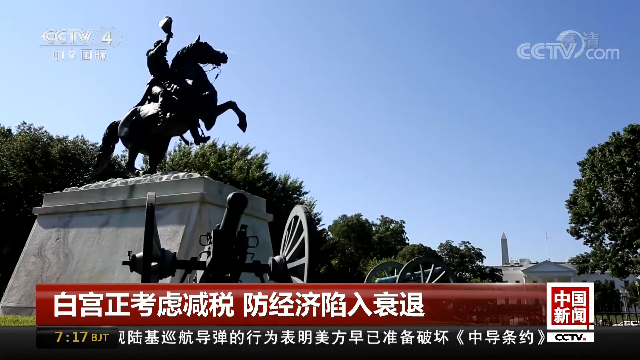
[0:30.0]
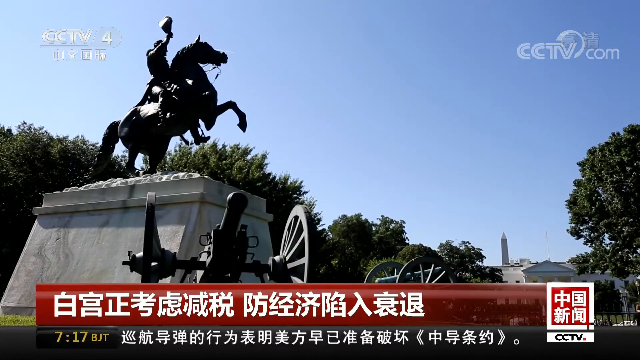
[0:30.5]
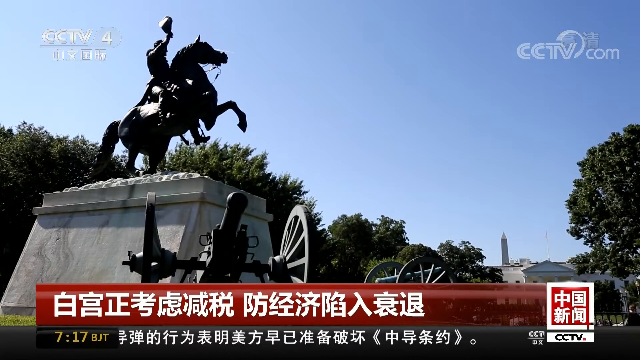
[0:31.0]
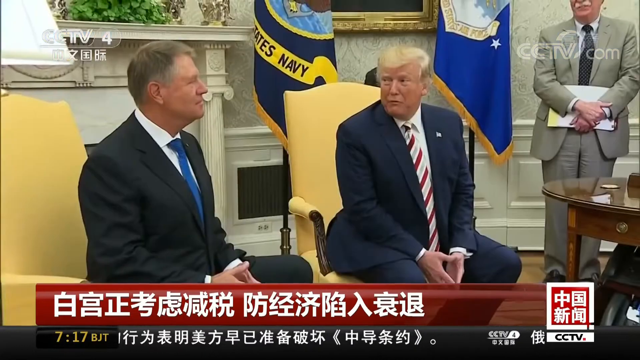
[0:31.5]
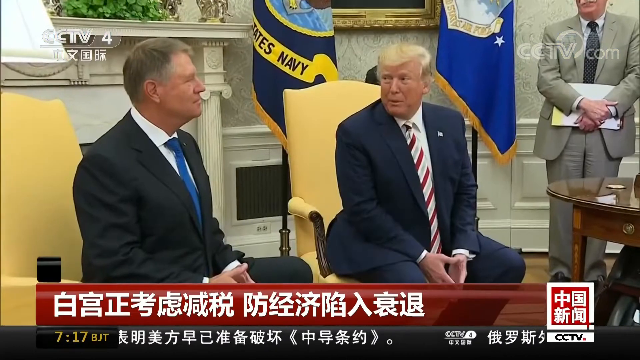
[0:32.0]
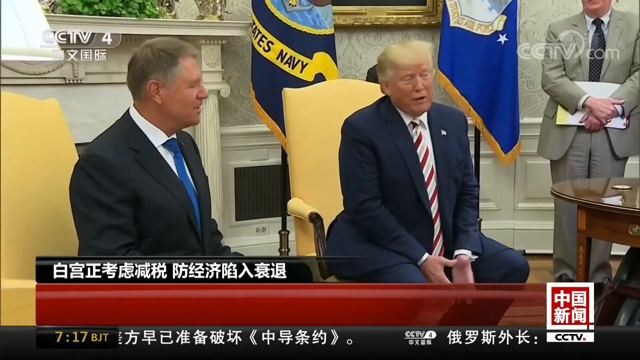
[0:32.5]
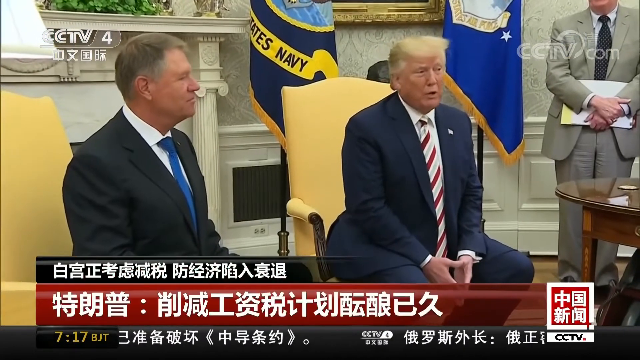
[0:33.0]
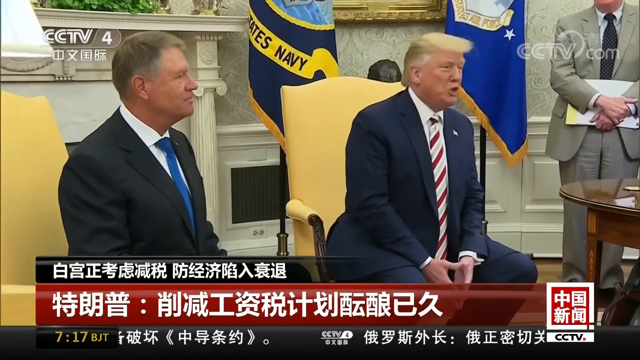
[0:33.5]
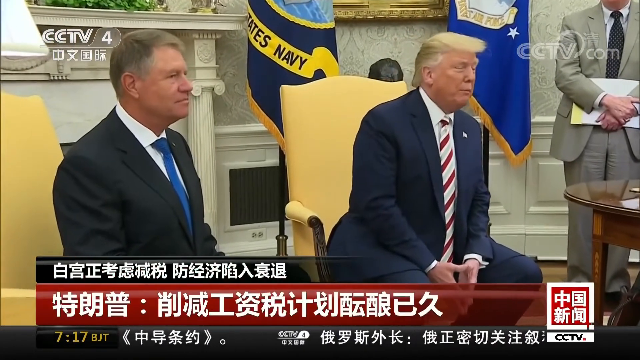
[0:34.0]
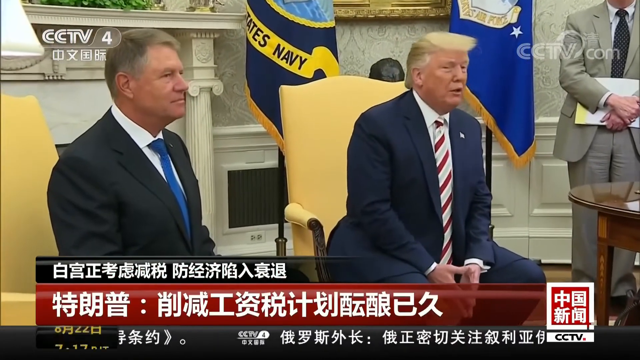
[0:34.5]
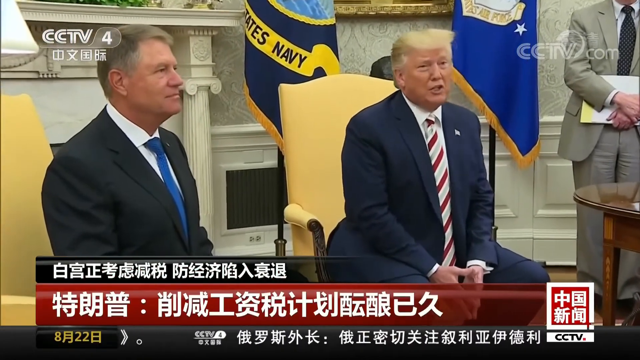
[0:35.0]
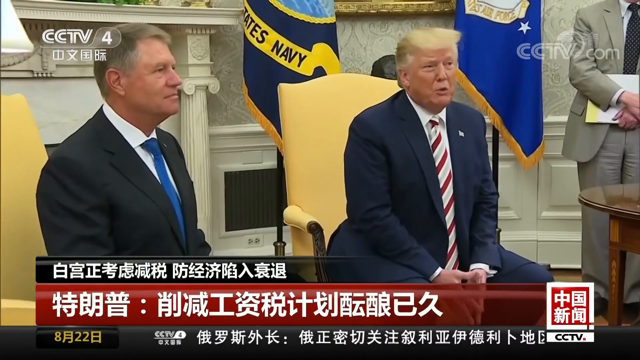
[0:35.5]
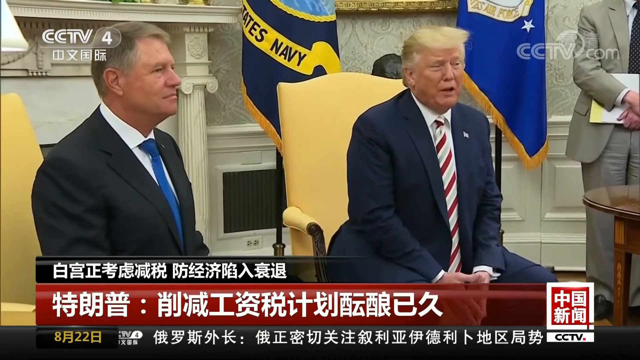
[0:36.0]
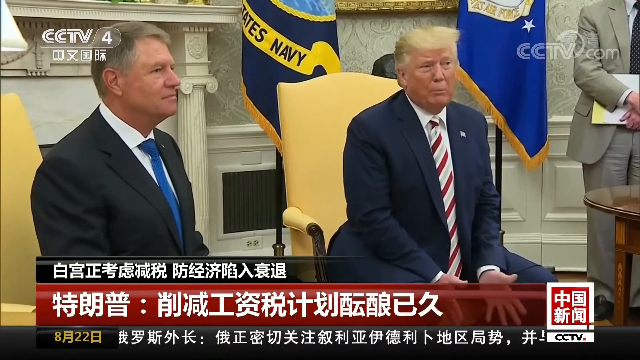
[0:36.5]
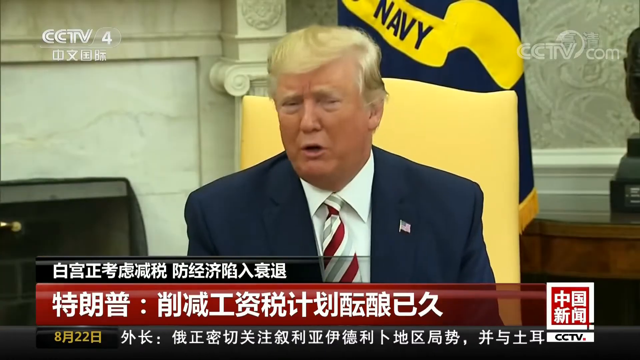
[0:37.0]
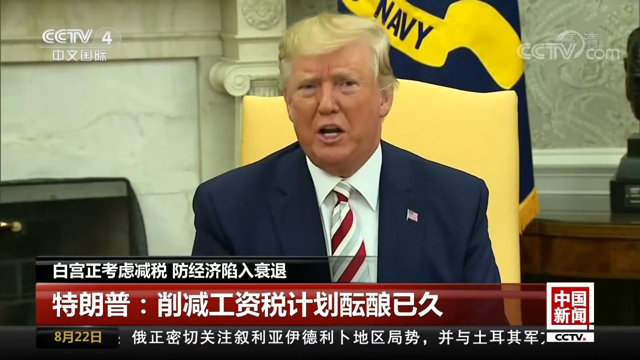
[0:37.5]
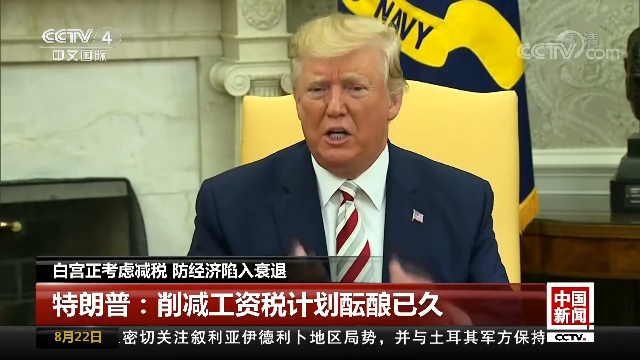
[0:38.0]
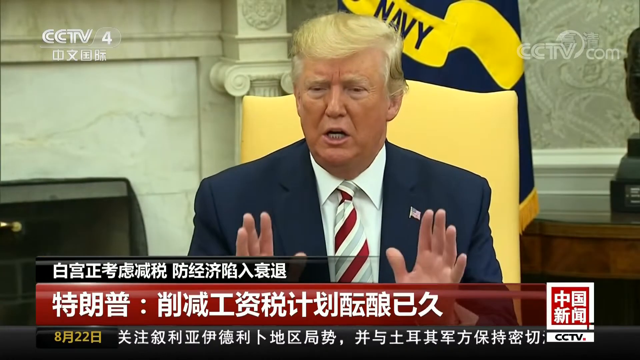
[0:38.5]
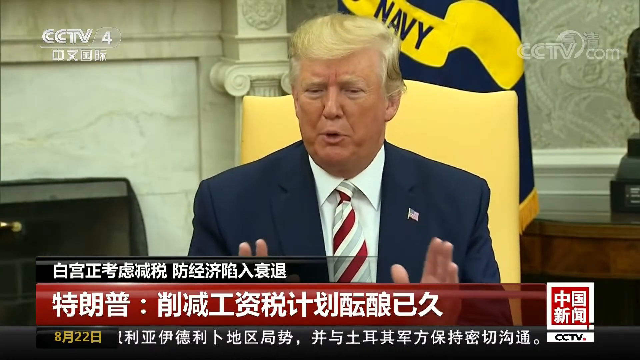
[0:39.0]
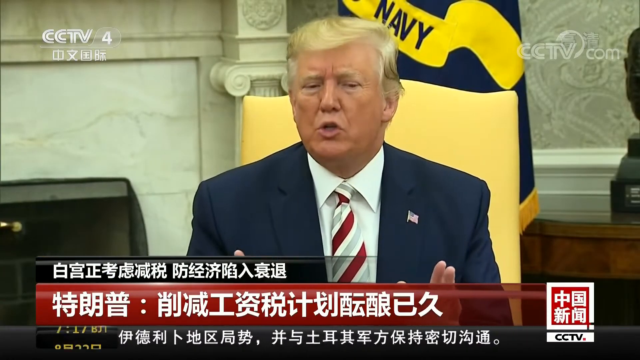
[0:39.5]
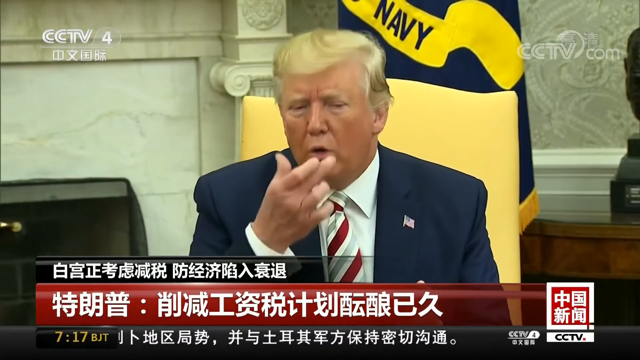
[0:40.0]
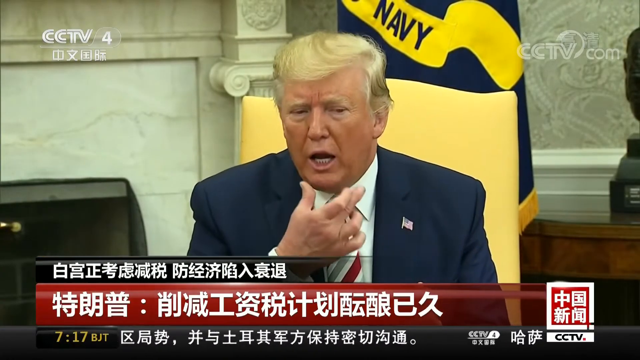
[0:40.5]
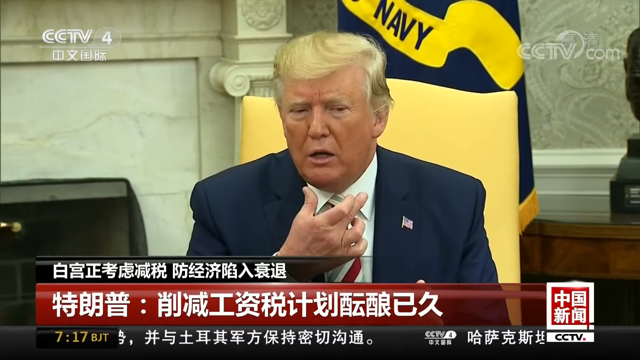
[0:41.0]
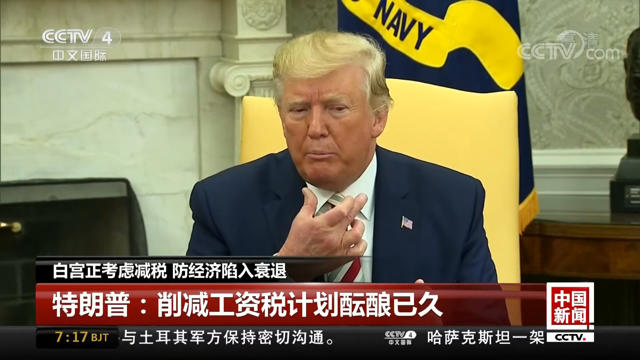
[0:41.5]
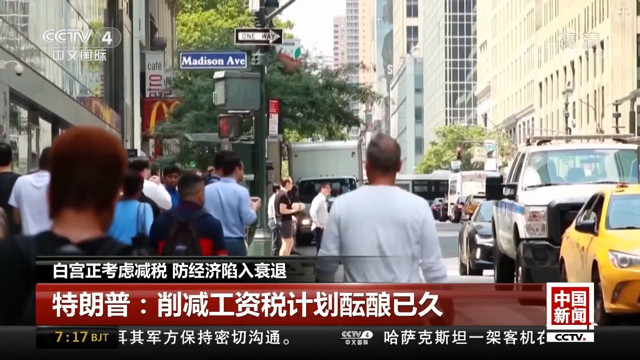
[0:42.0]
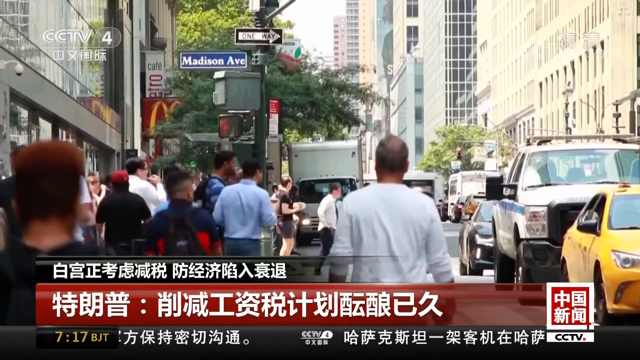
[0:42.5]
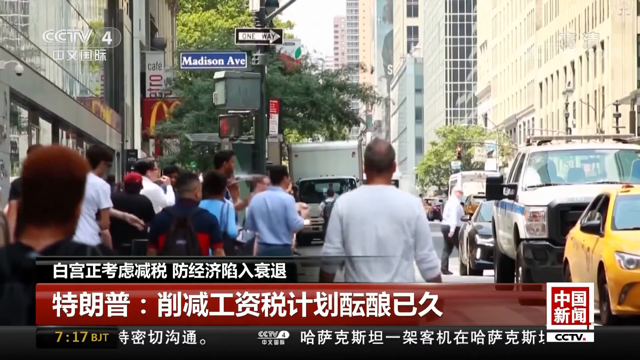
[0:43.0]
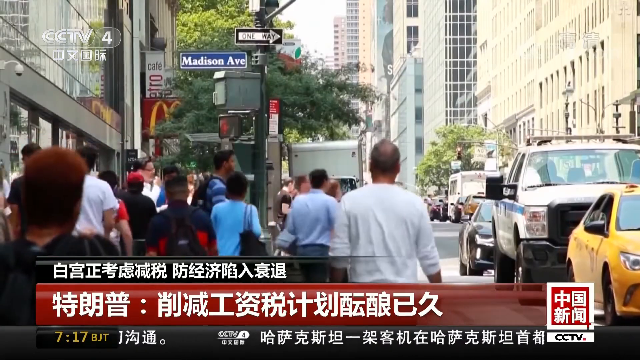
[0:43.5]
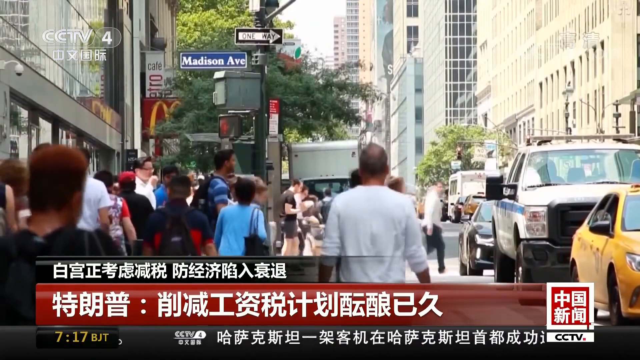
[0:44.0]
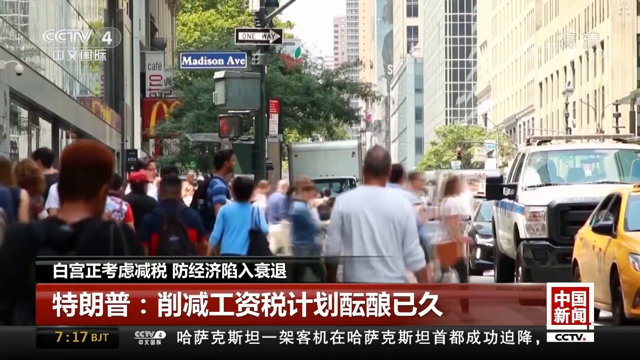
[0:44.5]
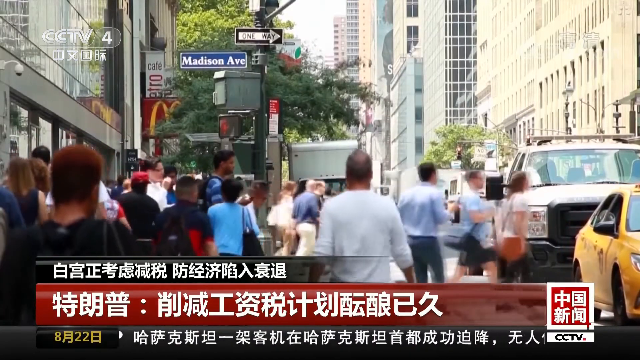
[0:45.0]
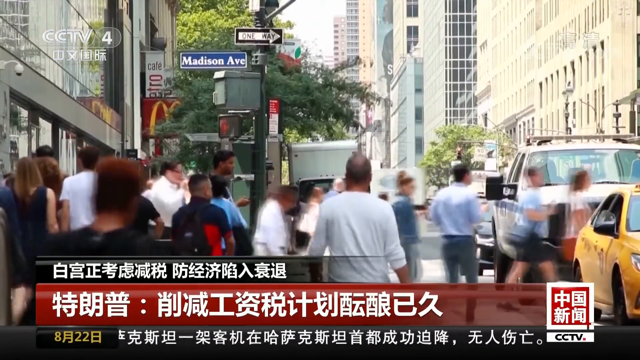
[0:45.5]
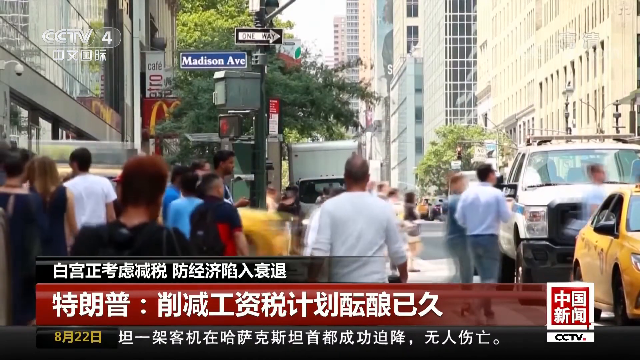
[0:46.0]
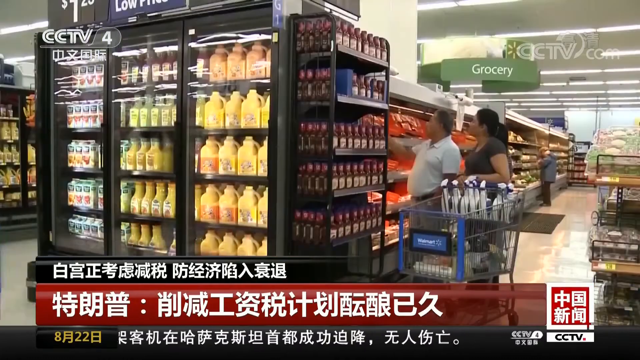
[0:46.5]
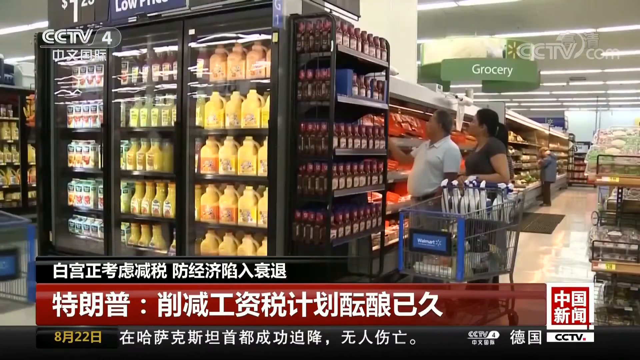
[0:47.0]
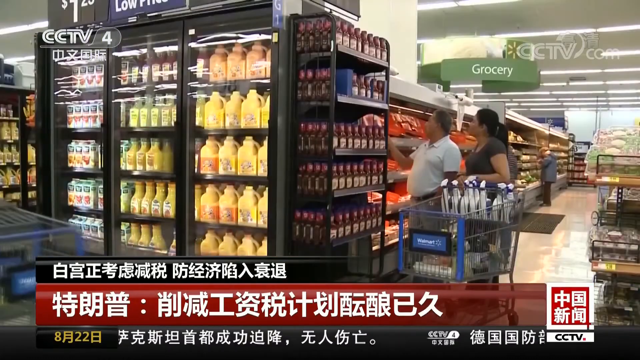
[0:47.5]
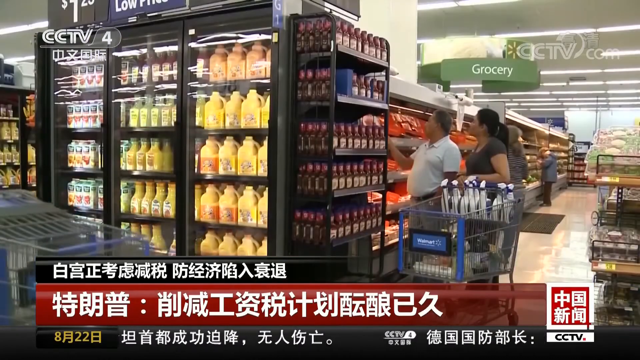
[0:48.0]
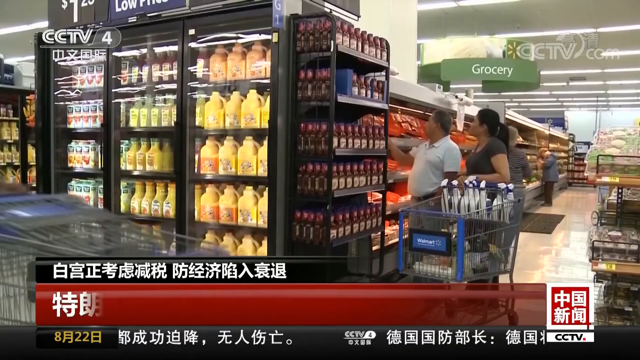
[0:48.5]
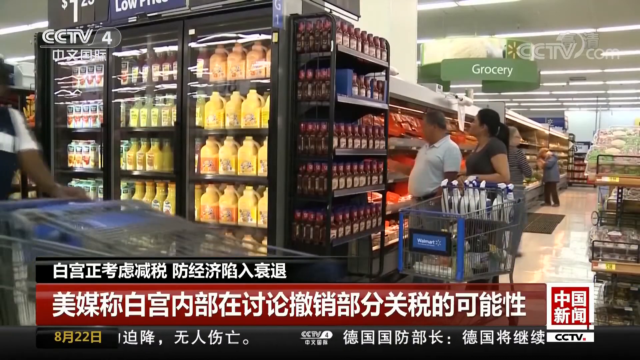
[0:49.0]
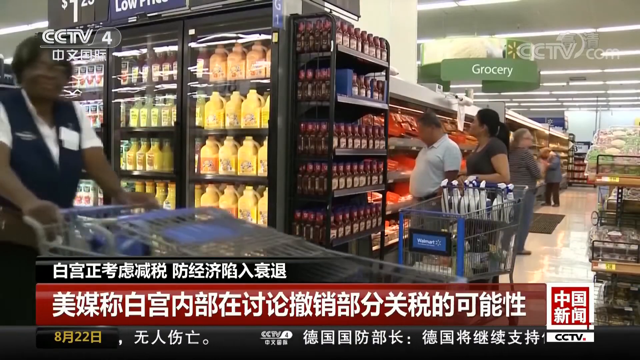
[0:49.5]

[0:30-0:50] The president appears, talking to another man, possibly a representative from China or some other foreign country. The other man wears a black suit with a blue tie. The president wears a navy blue vest with a kind of candy-cane patterned tie, has blond or bleached blondish hair, and looks like he has a gold ring on his right hand. The next scene shows a lot of people downtown on a street: some crossing the street, some walking down the sidewalk. Then there is a scene of people in a grocery store.